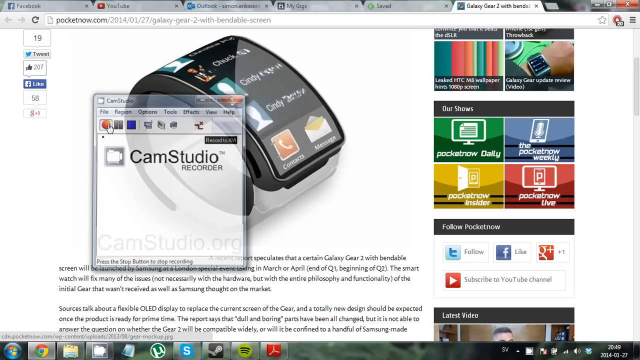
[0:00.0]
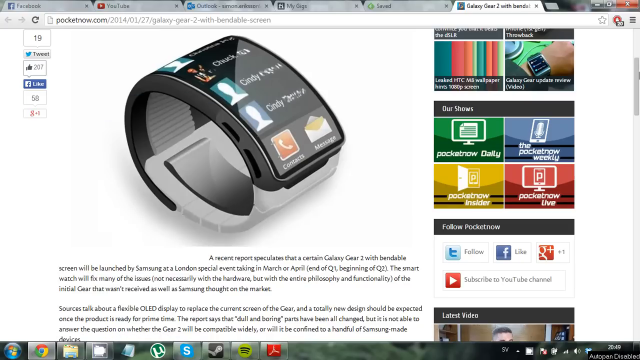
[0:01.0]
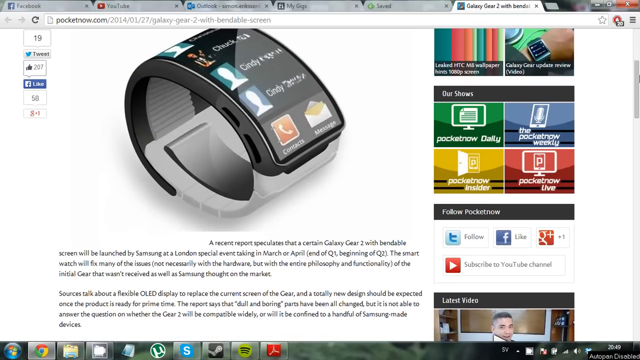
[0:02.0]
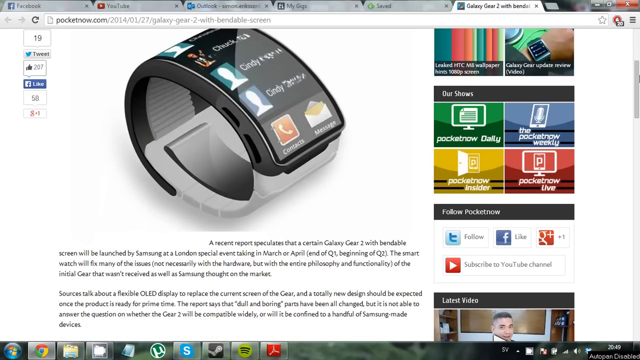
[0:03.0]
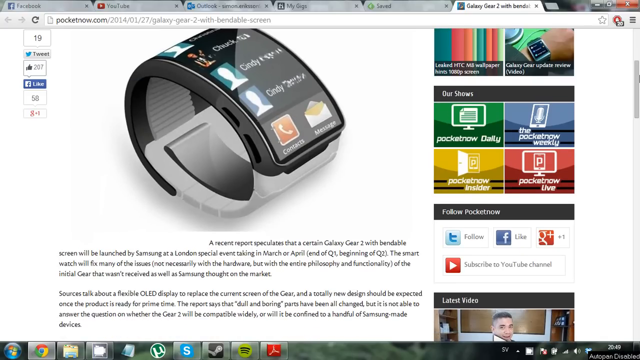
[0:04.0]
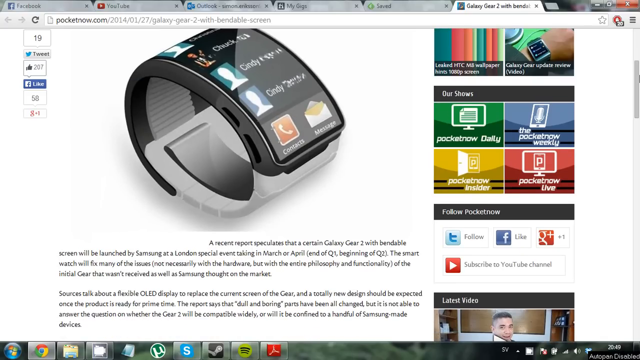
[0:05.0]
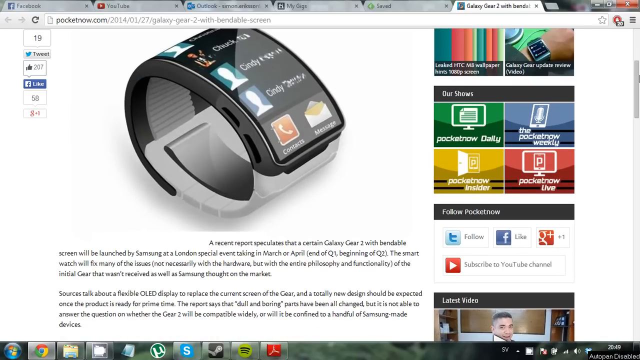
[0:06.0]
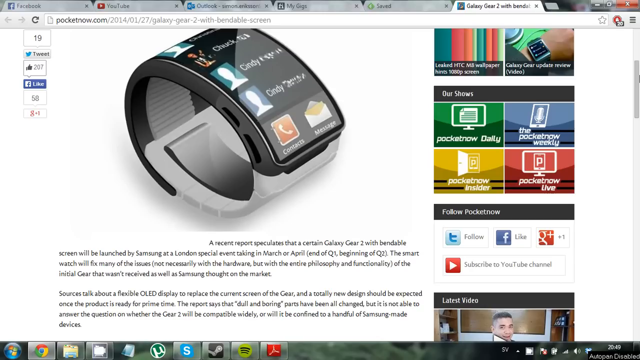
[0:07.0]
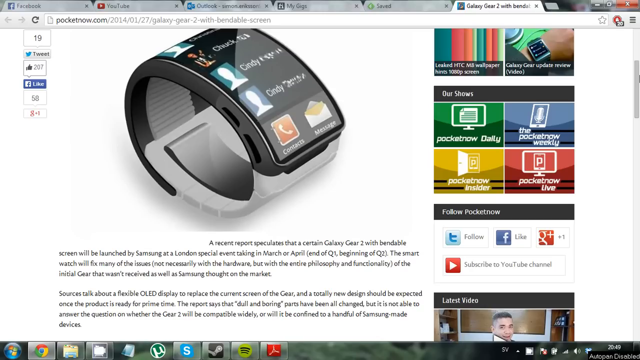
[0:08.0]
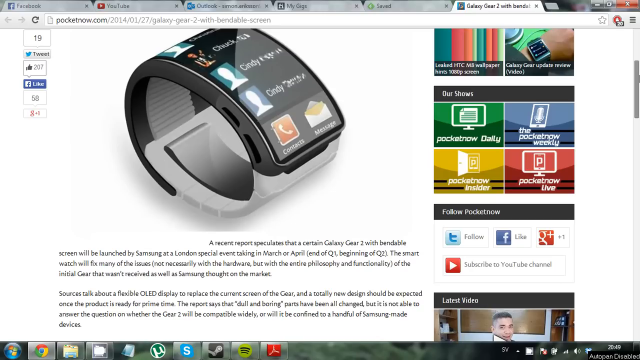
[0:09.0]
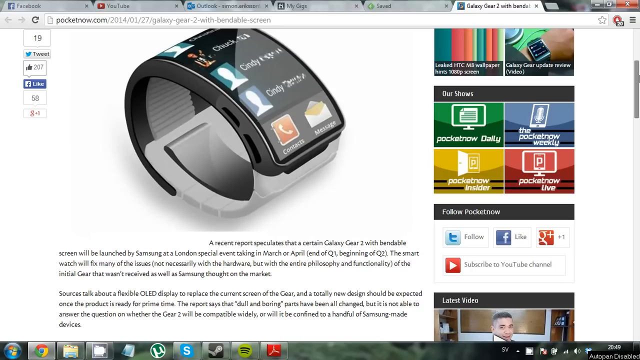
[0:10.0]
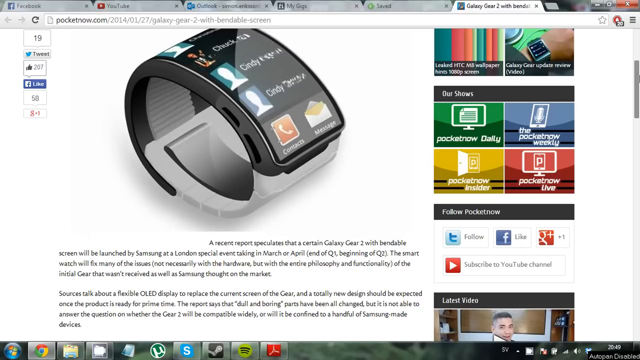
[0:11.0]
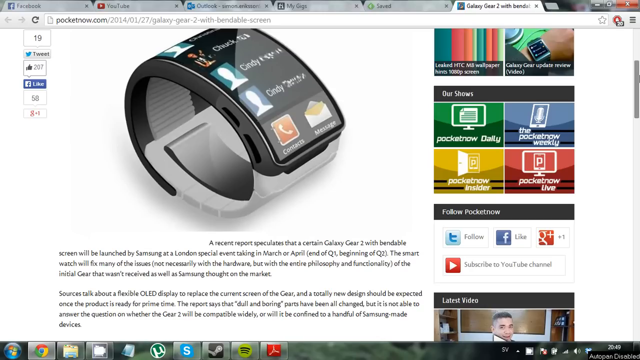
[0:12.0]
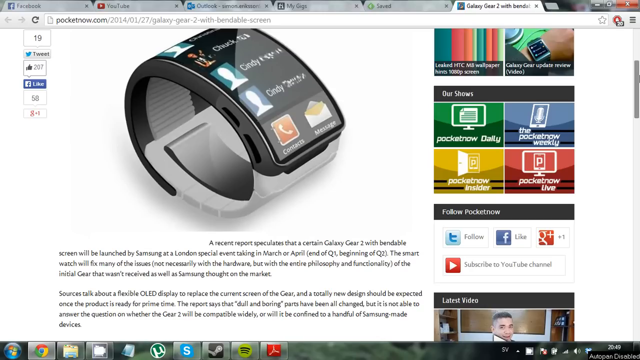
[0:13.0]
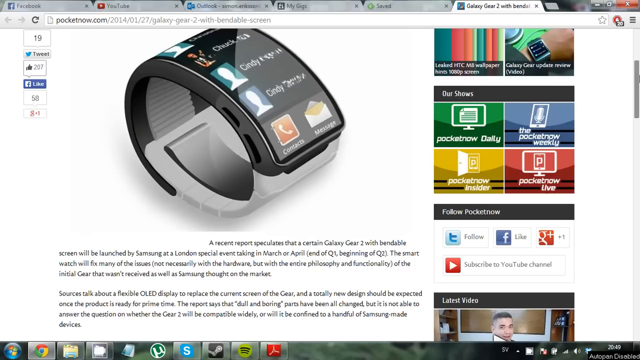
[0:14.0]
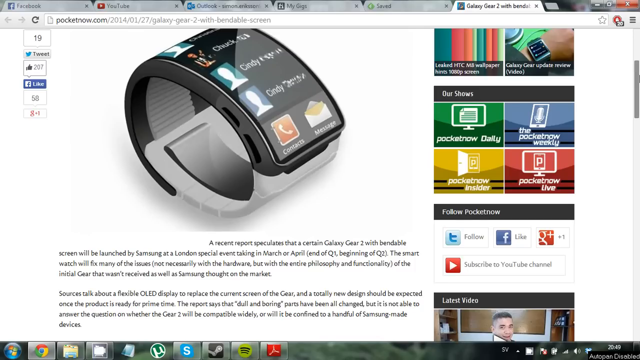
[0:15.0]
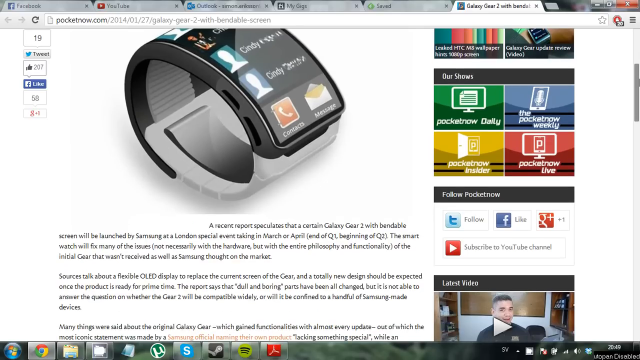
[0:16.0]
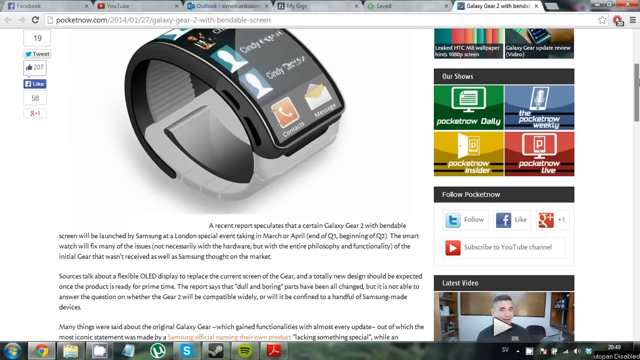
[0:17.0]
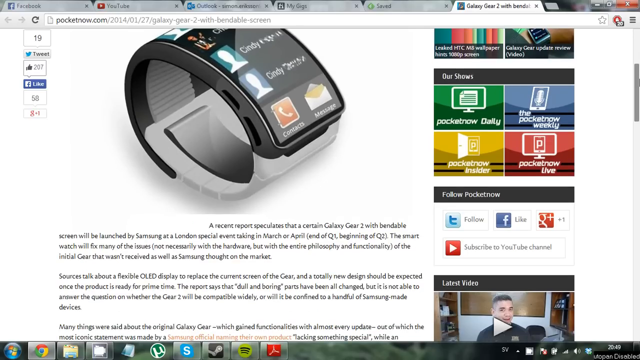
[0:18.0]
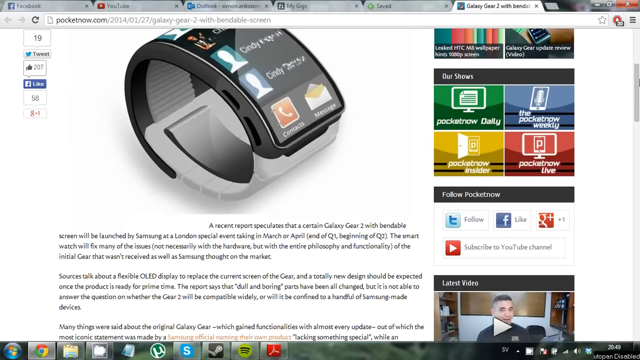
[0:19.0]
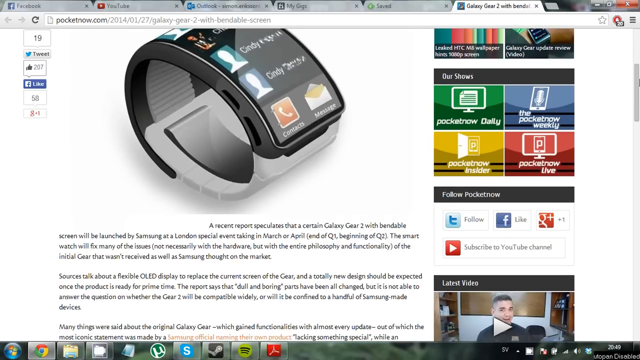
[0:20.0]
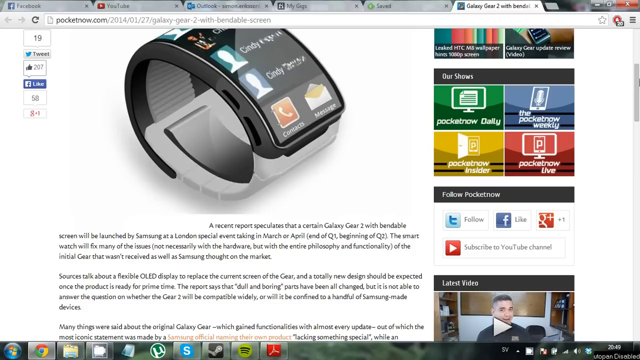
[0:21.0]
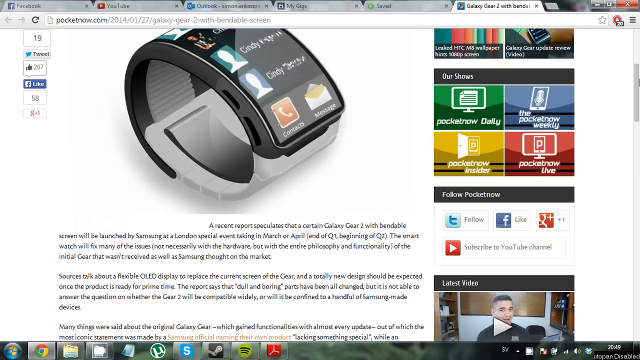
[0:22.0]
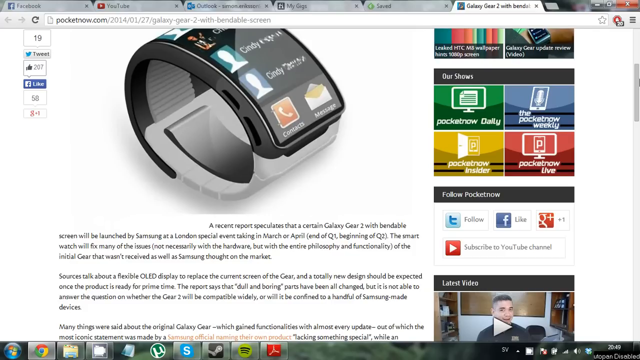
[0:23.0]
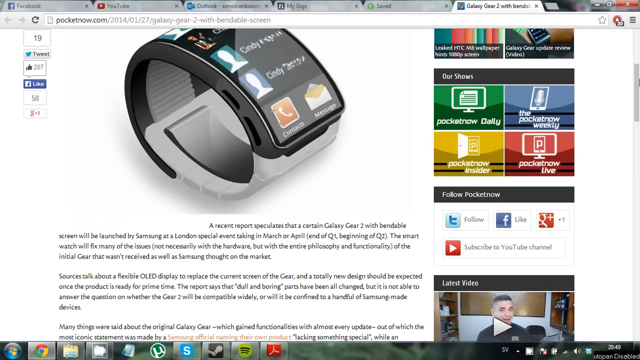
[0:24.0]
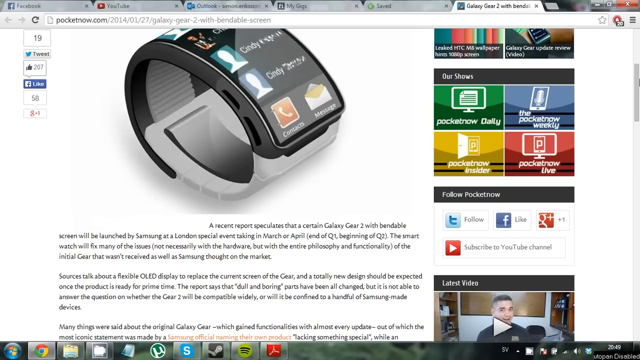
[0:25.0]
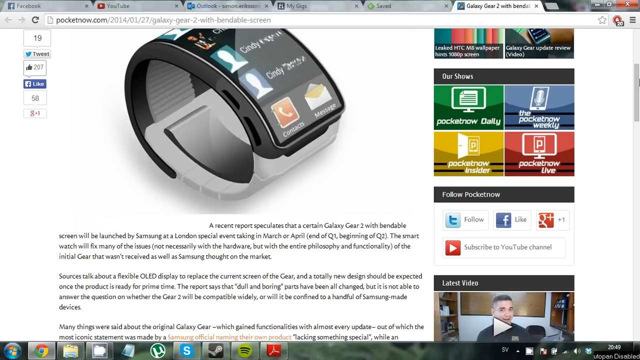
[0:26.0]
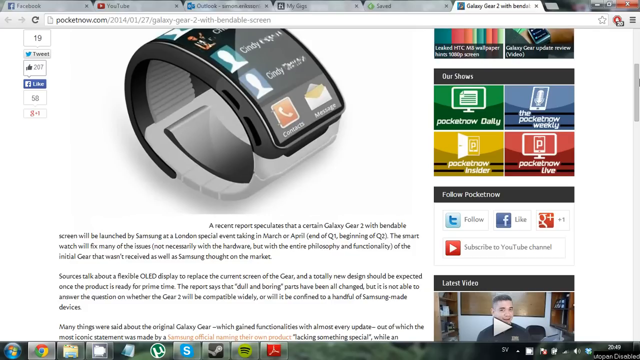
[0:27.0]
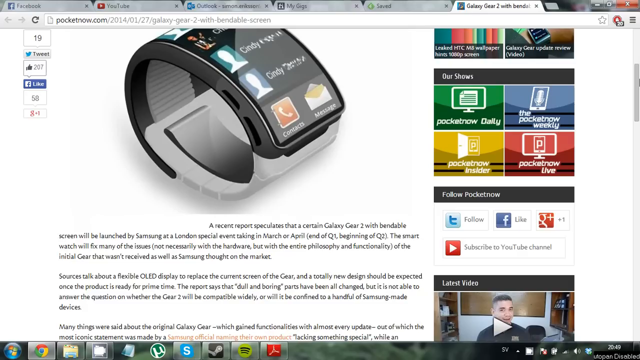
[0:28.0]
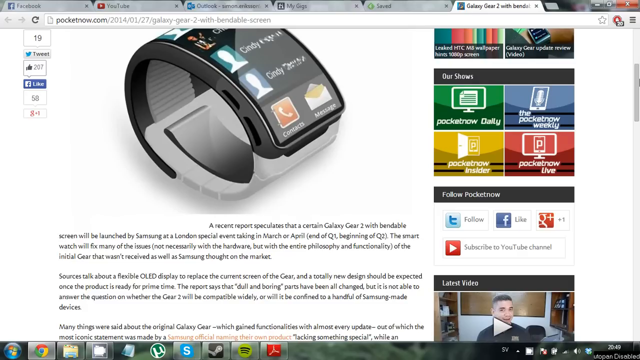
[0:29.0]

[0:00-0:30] A smartwatch is shown; it seems attractive and seems to be curved according to the shape of the hand. Some information is written on screen, but it is very small and not clear enough to read. This is cam studio recorder.